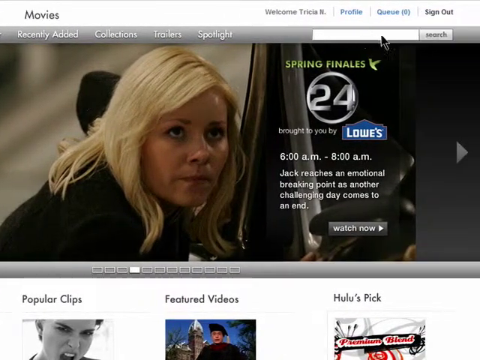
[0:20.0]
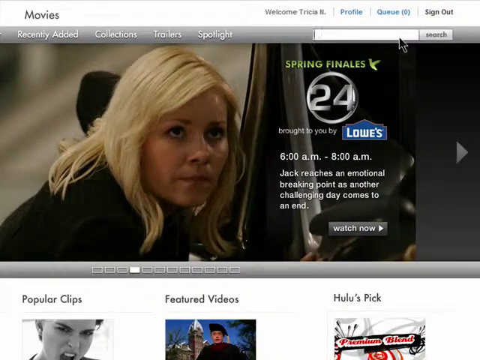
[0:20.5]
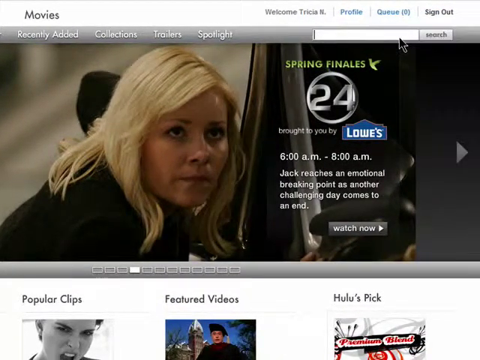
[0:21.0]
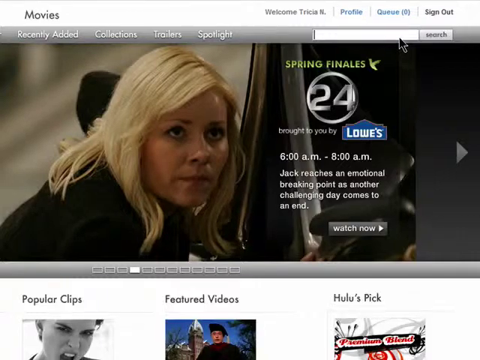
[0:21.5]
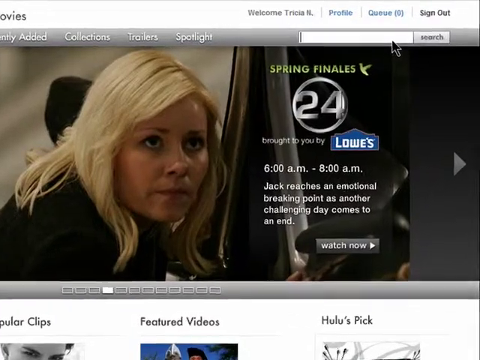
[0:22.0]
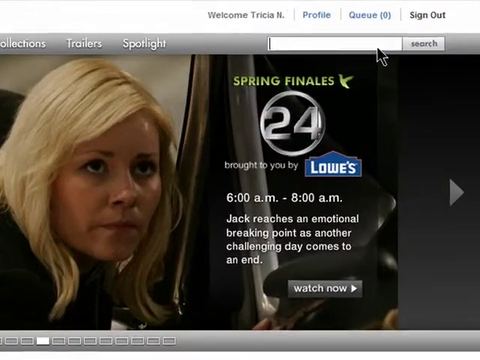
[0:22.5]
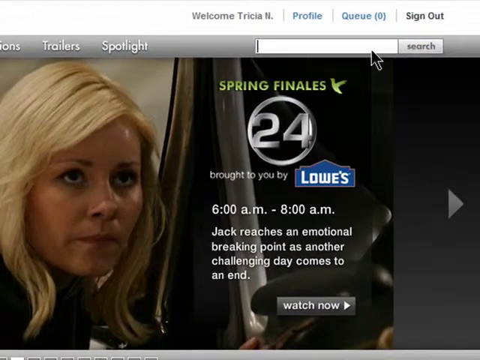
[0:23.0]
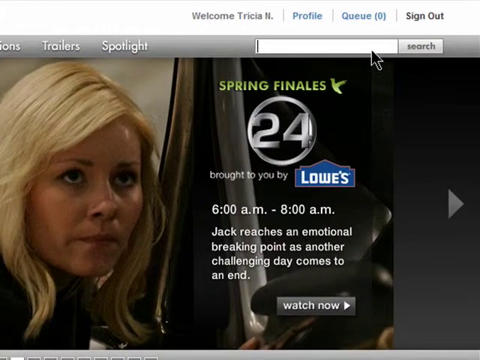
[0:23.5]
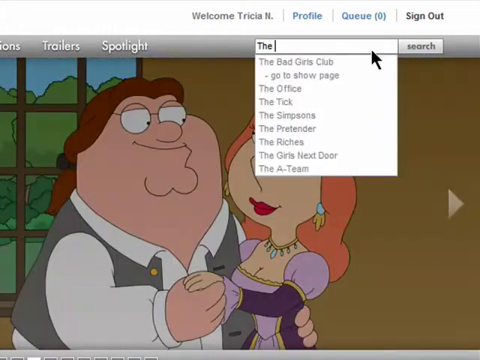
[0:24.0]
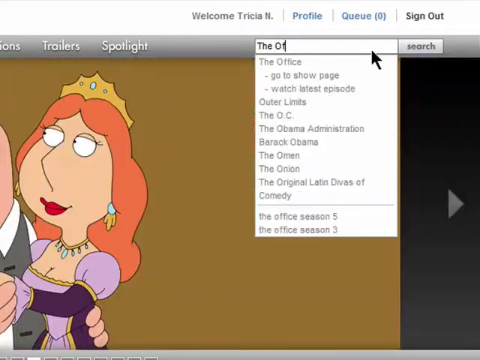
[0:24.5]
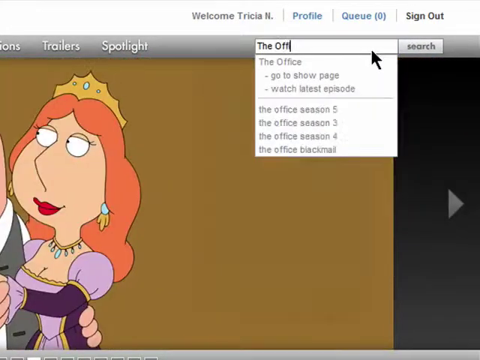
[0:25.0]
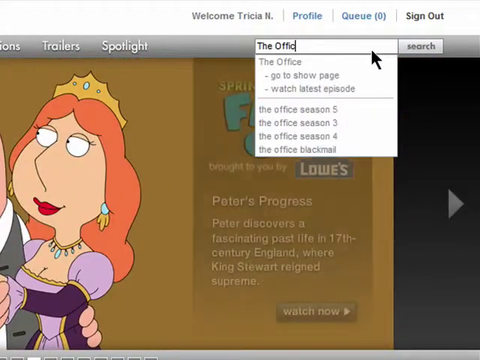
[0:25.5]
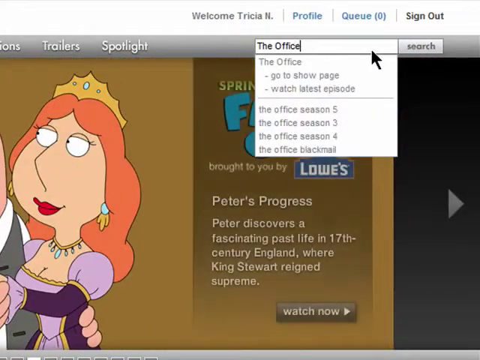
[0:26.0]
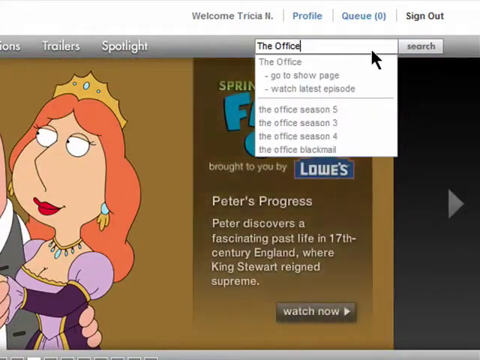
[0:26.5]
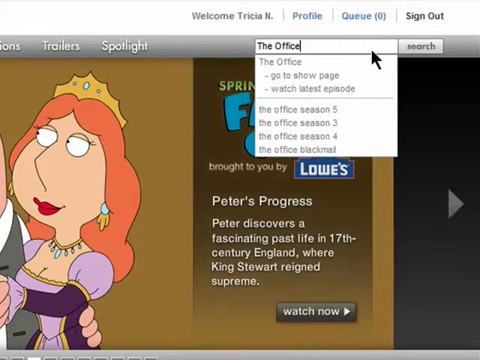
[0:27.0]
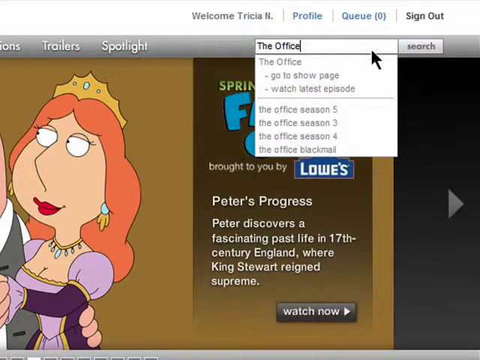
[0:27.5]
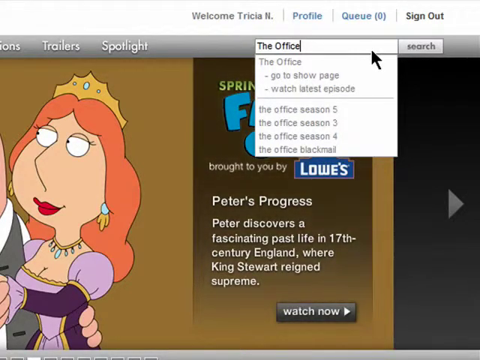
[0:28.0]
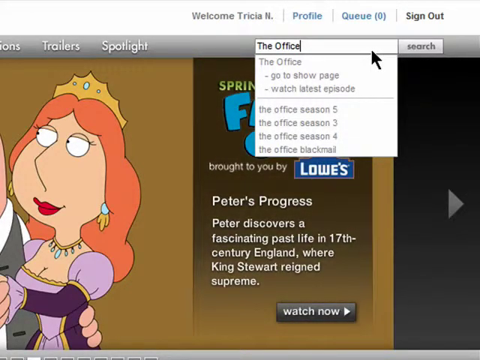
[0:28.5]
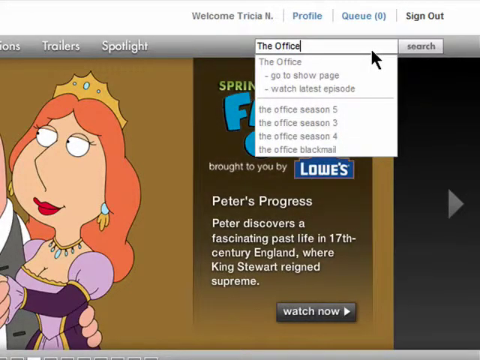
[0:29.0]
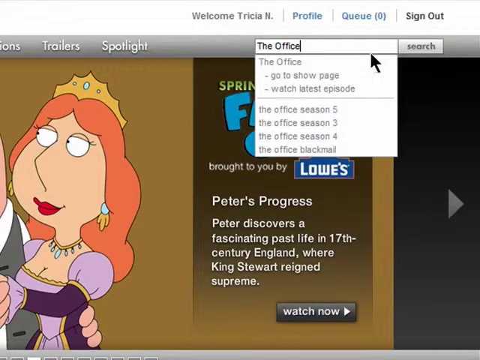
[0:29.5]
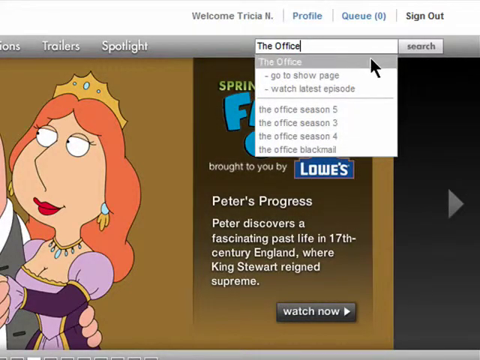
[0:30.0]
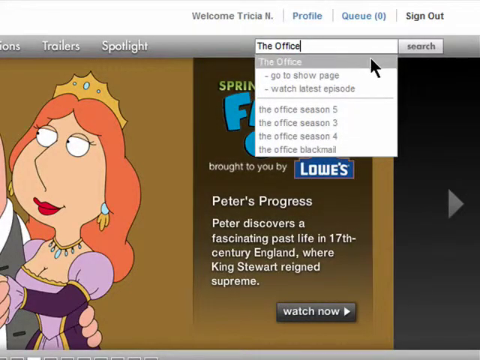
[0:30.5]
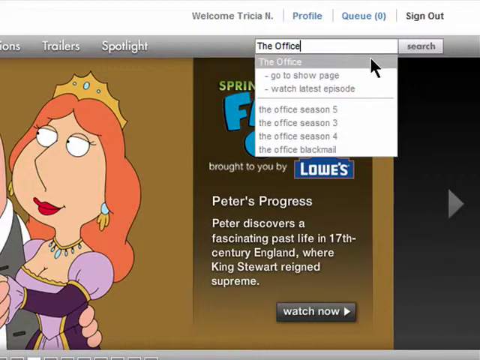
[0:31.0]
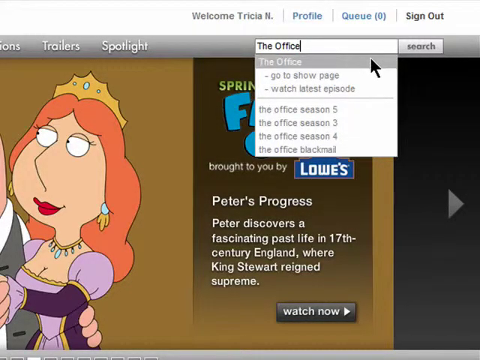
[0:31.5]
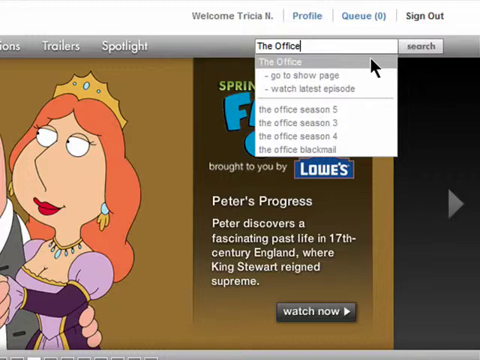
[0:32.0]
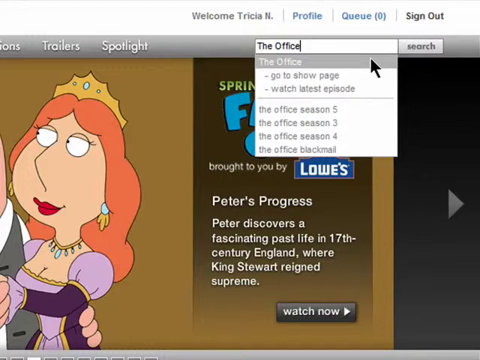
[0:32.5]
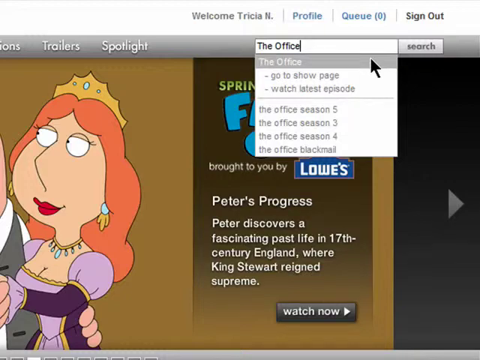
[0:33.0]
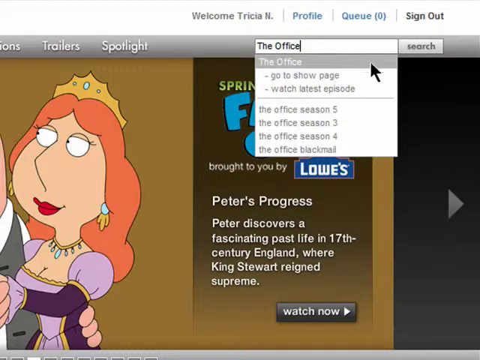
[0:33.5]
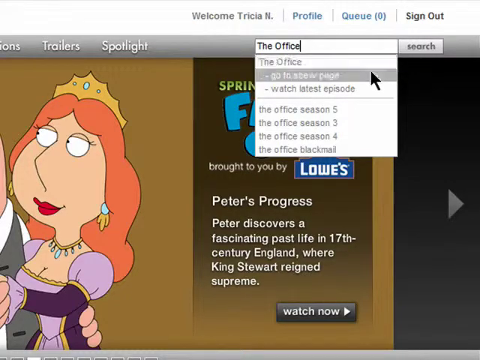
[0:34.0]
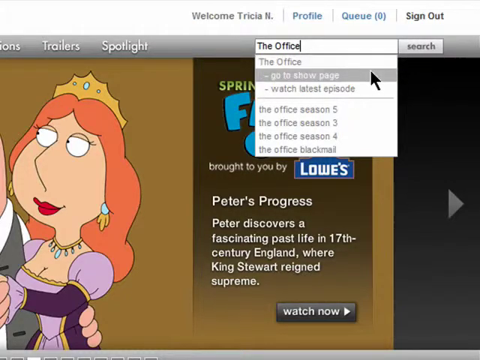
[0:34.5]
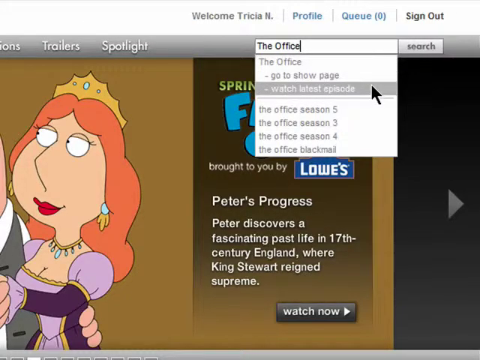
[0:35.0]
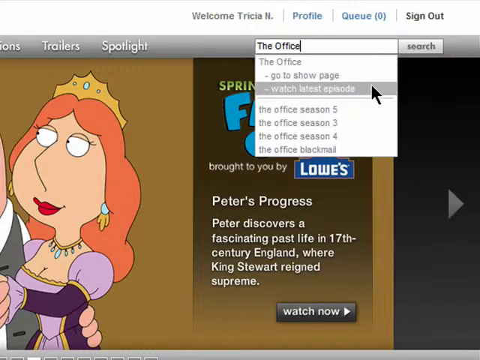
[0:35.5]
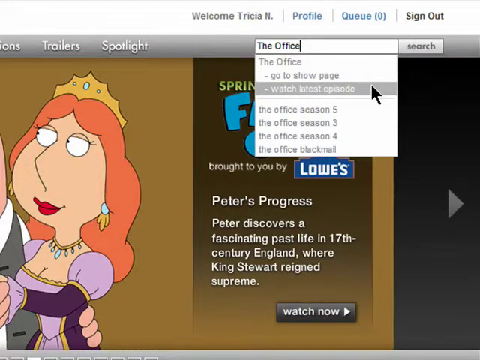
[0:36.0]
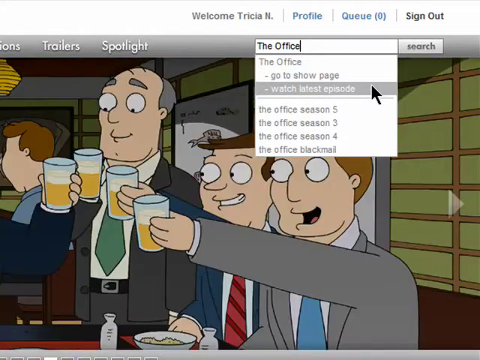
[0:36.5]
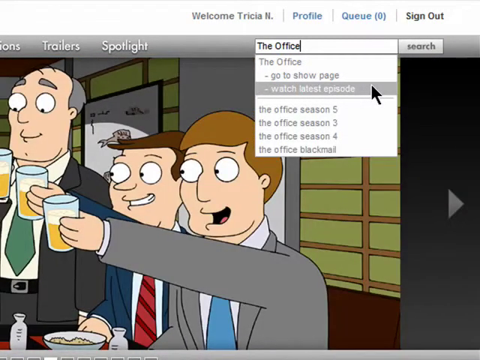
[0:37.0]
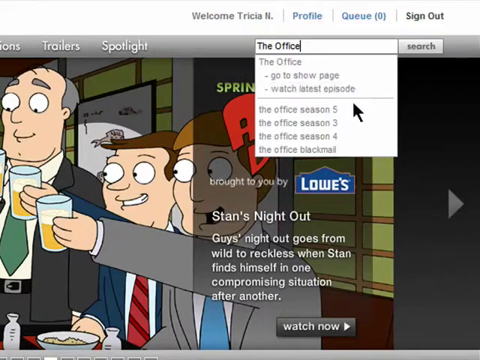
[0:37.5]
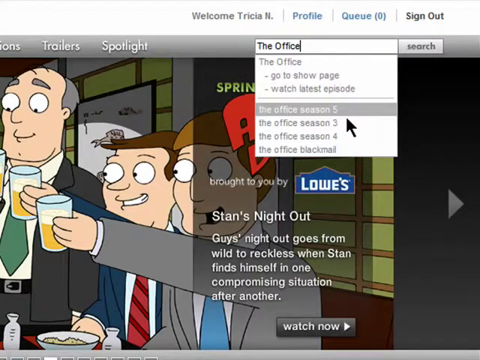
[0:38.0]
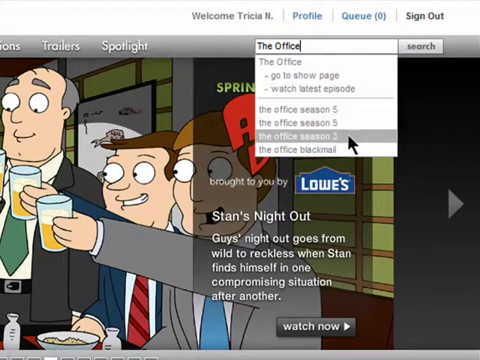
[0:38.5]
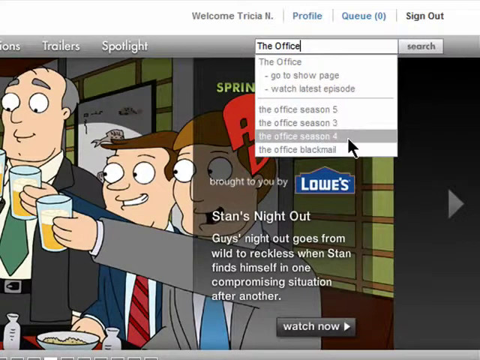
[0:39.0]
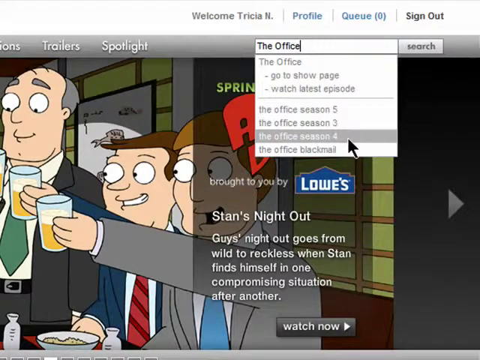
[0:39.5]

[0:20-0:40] A close-up view shows only what is on a computer screen, zoomed in so closely that the monitor itself is not visible. A Hulu page is pulled up, with "Welcome Tricia" in the upper right corner, next to buttons that say "Profile," "Queue" and "Sign Out." The main focus of the page is a woman with medium-length blonde hair, bent over a bit from the waist, who looks like she is wearing a black jacket. The page shows the season finales for the show 24. The user uses her cursor to type into the search bar, and the view zooms in as she types "the office." She moves the cursor down and hovers over "watch the latest episode," then moves down, hovers over "watch season 4" and clicks on it.